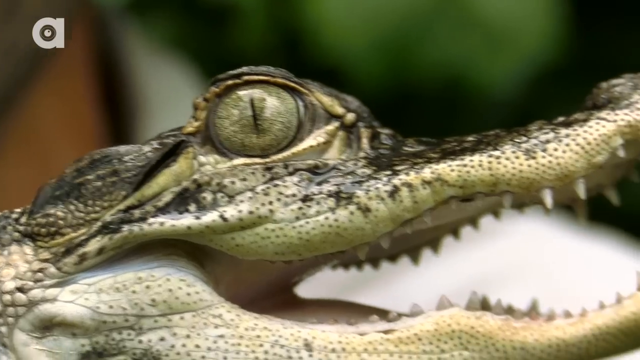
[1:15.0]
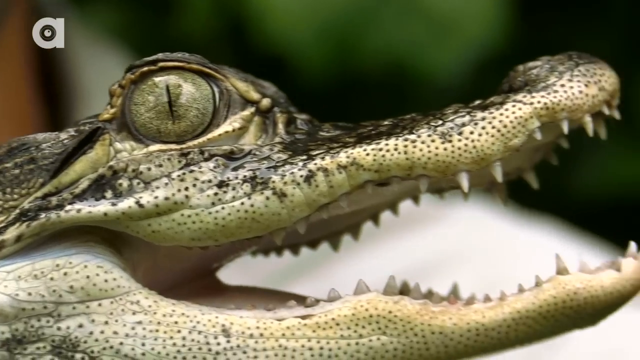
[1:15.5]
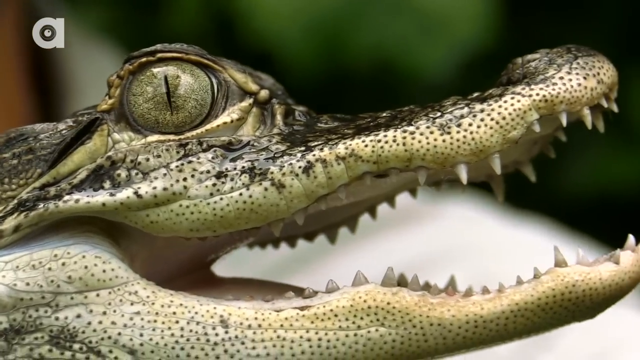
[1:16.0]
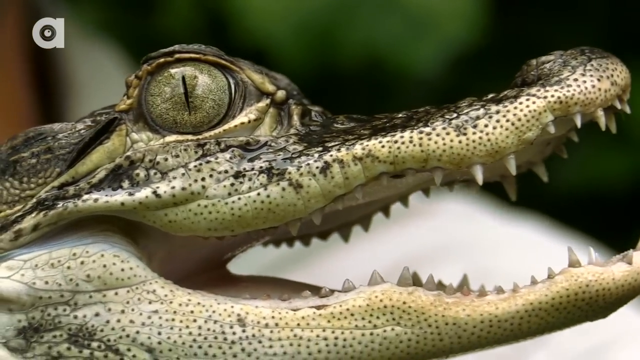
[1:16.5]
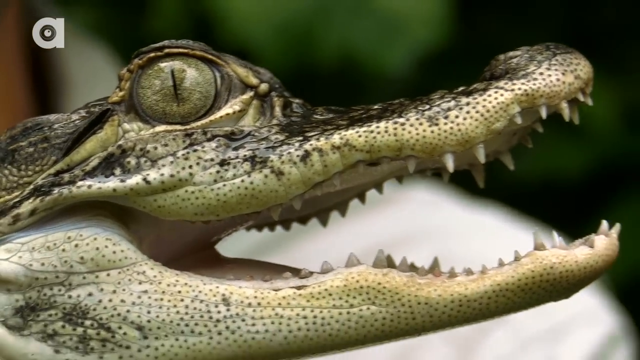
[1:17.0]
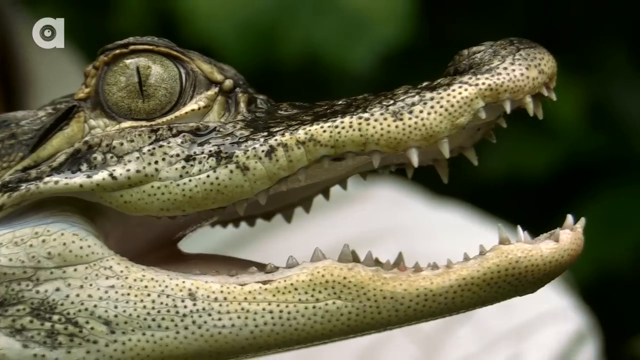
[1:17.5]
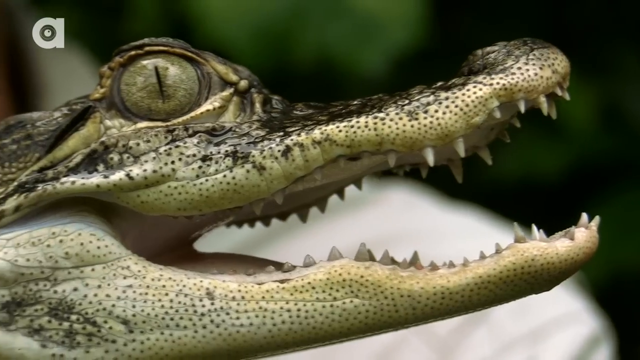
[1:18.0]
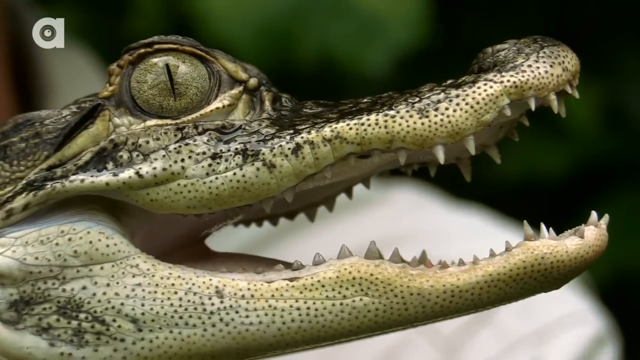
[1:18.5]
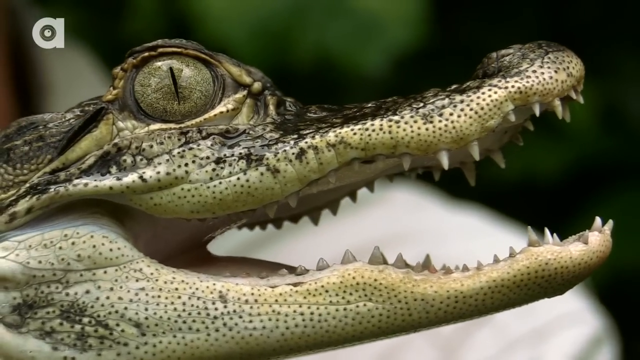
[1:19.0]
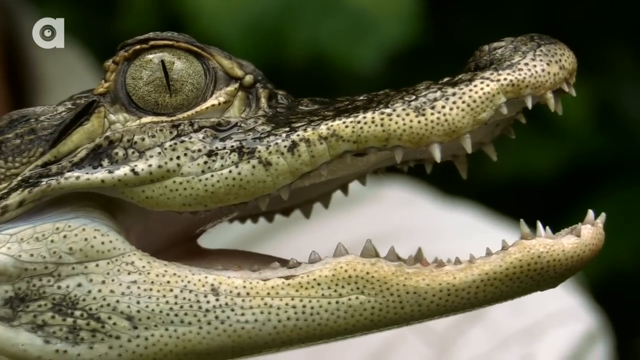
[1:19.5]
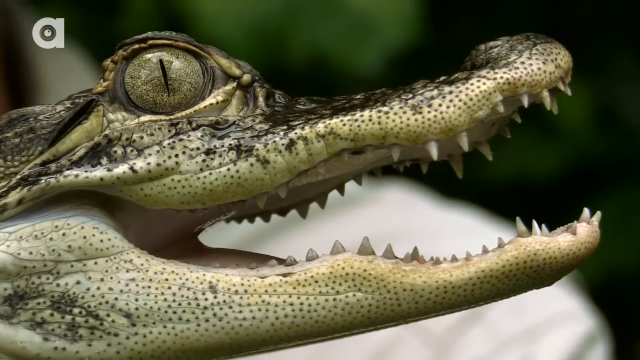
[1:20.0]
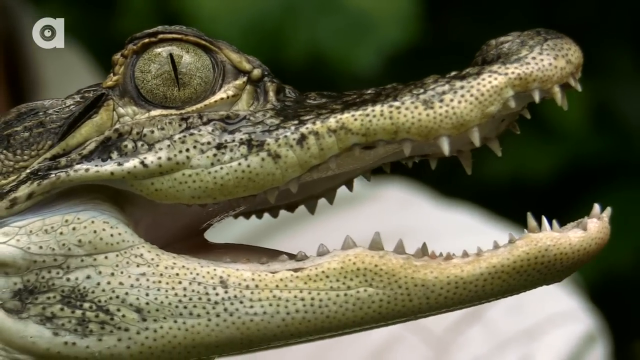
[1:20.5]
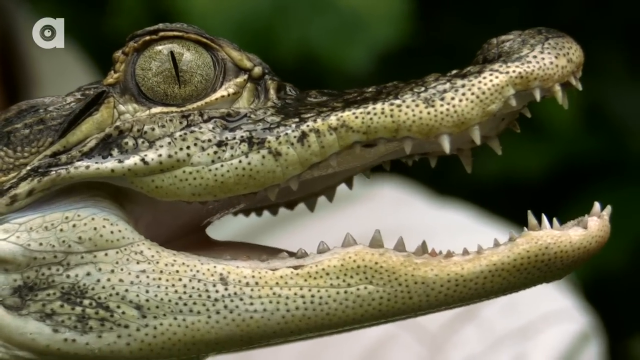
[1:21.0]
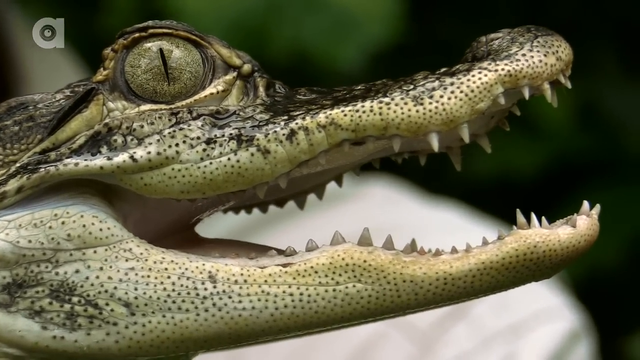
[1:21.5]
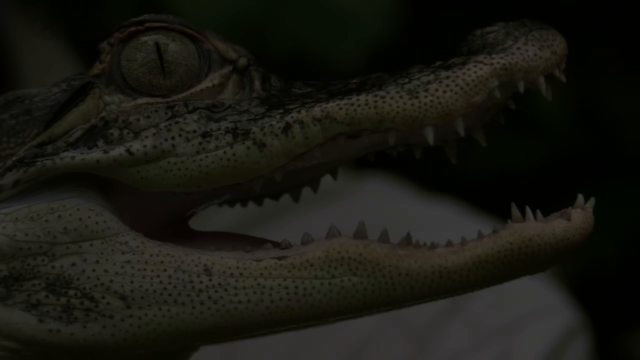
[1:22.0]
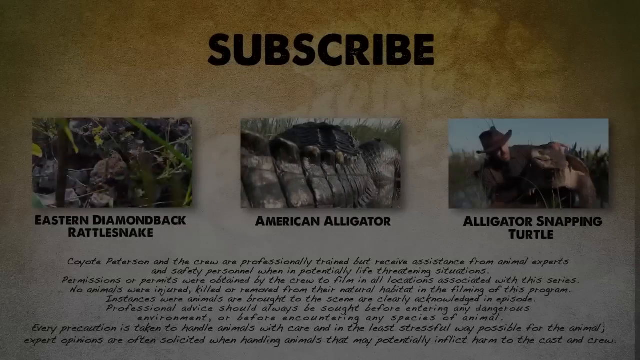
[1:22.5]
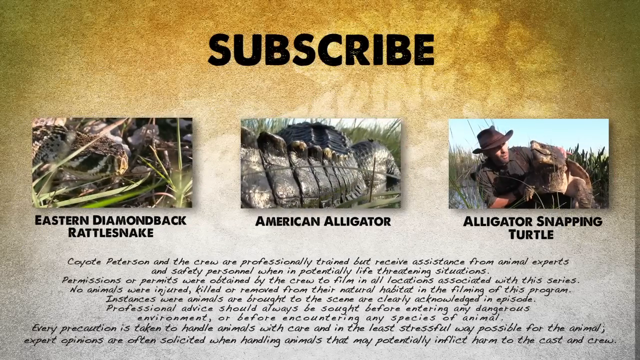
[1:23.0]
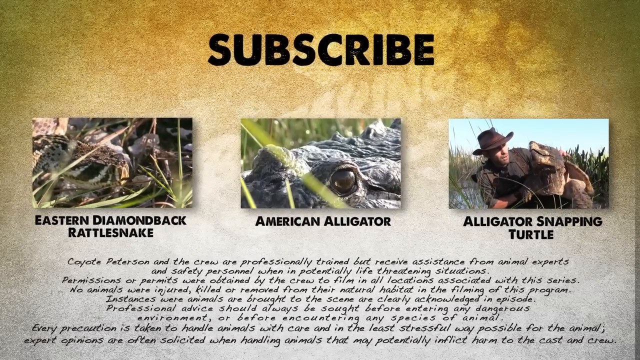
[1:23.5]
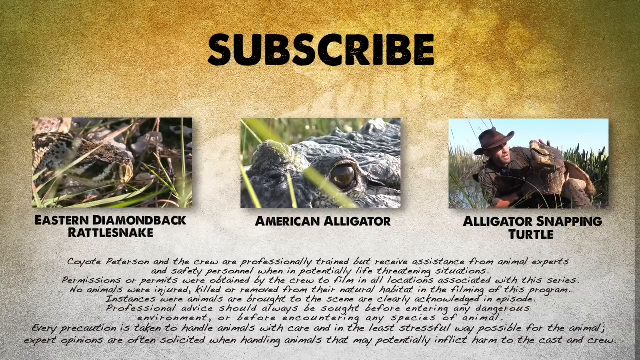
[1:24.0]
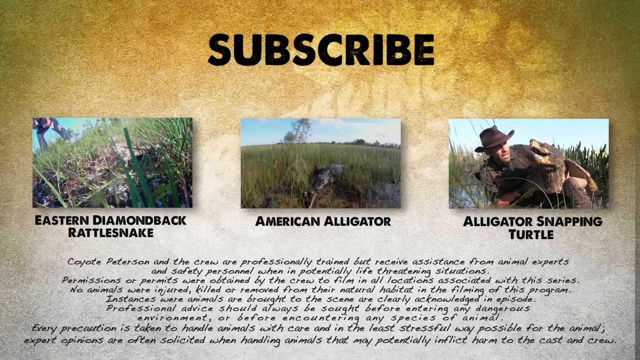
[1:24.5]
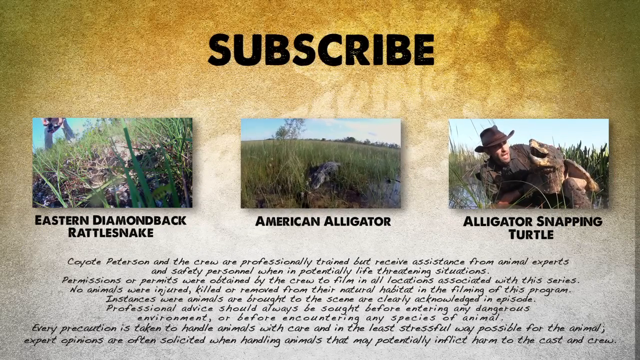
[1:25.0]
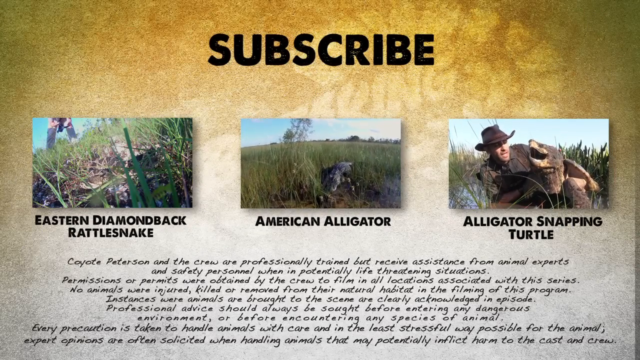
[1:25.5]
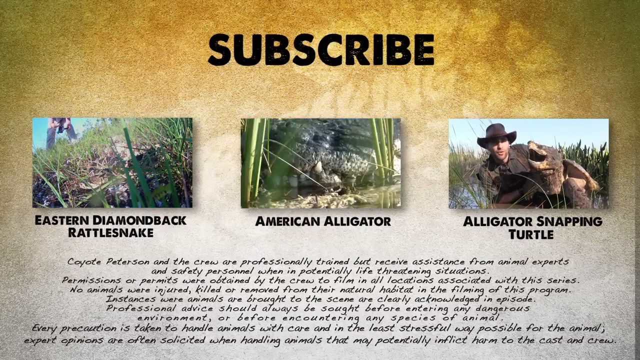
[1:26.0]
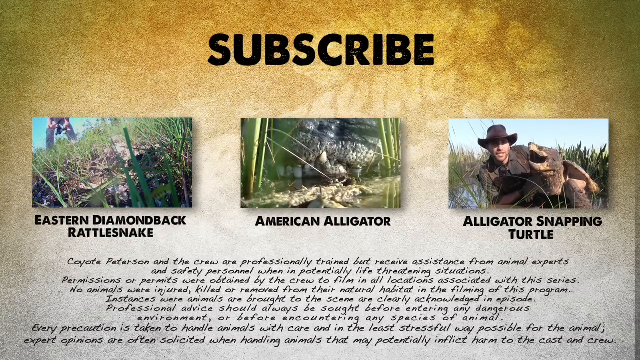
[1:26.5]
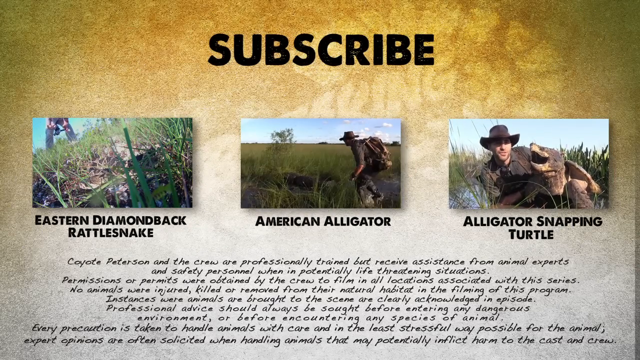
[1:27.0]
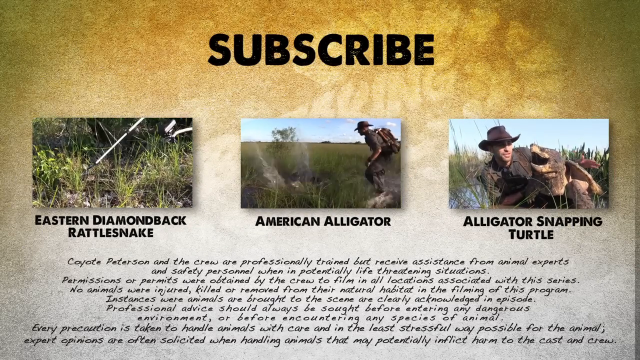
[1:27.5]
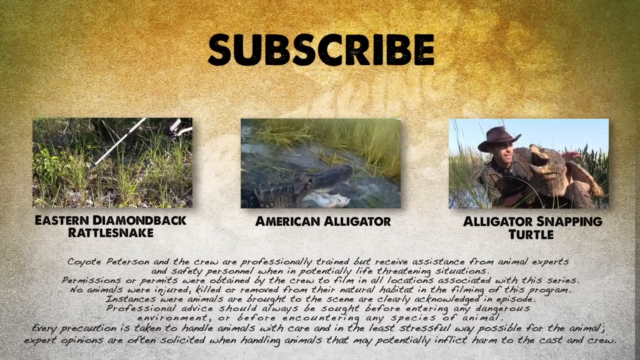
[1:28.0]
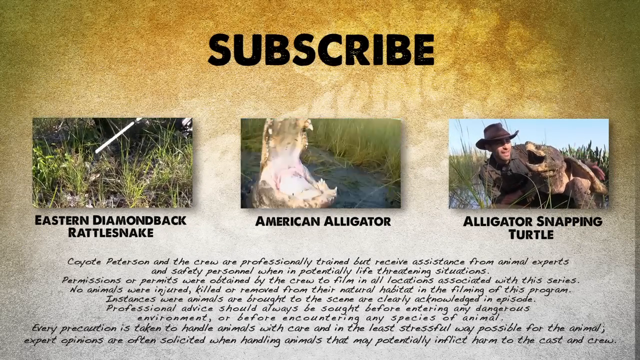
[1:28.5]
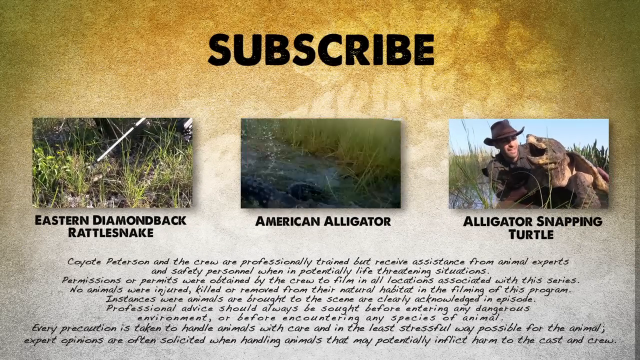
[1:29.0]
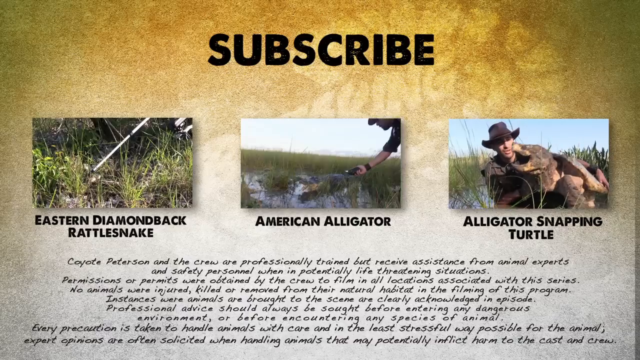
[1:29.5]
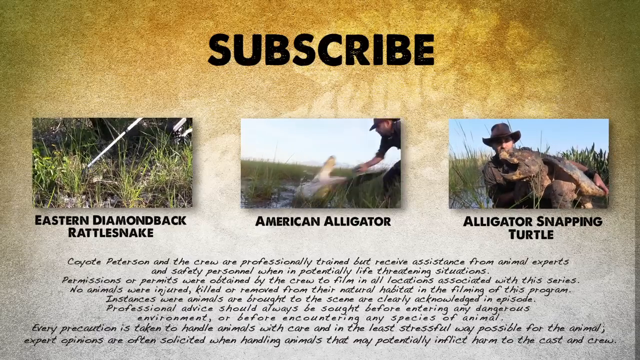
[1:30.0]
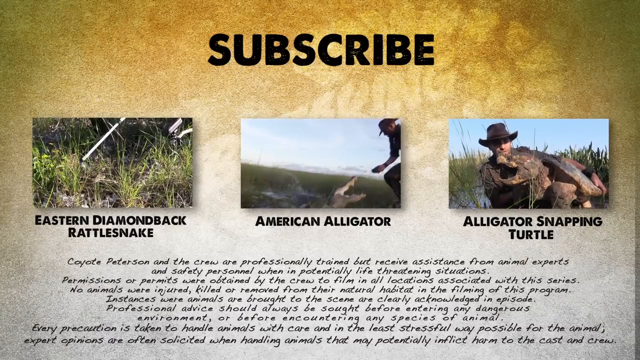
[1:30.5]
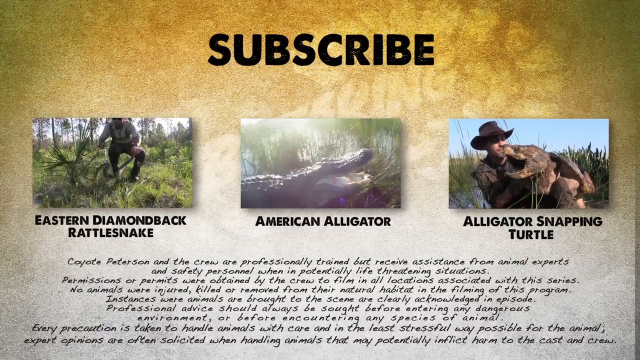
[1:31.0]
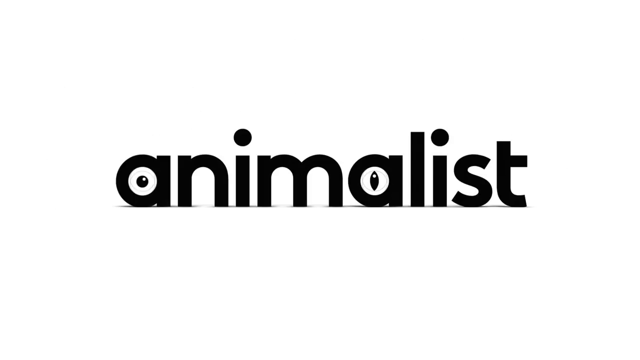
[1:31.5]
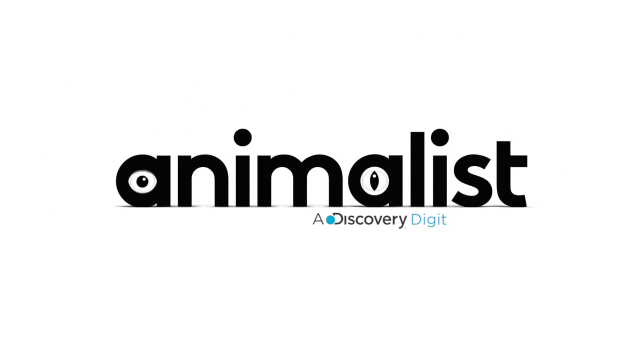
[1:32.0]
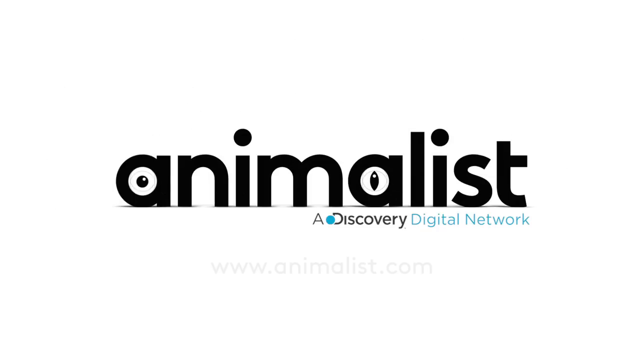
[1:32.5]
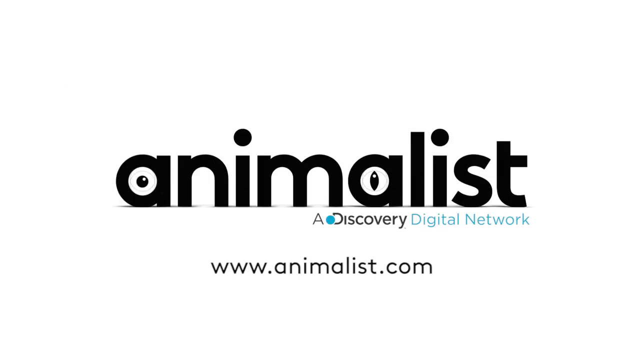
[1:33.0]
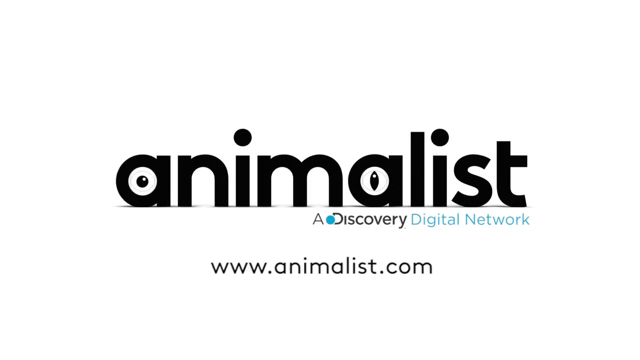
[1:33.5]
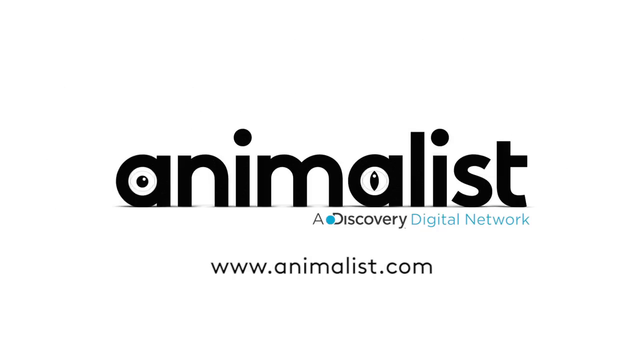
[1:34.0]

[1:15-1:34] A zoomed-in view shows the right side of the baby alligator's face, with its mouth open to the right, revealing many tiny teeth. Its face has dark black and brown spots around the mouth, with much darker colouring on top. Its eye is very prominent at the top left of the screen; it is greenish, with a pupil that looks like a black vertical slit. The folds in its face are pronounced at this close range, and its tongue moves up and down a little at the back. The video then switches to a box containing three sub-boxes with the word "subscribe" and preview boxes for three other videos from the same creator, labelled "Eastern Diamondback Rattlesnake," "American Alligator" and "Alligator Snapping Turtle," with an icon reading "subscribe now" at the bottom right. Finally, a screen reads "Animalist, a Discovery Digital Network, www.animalist.com."